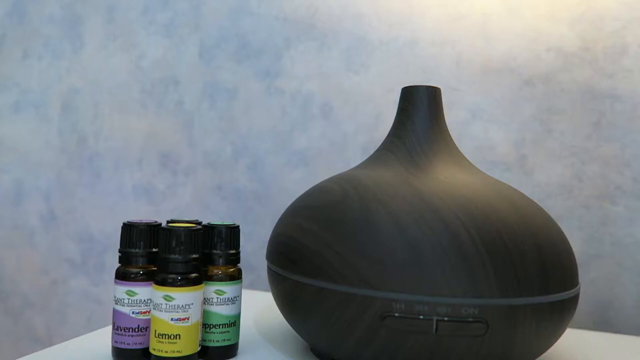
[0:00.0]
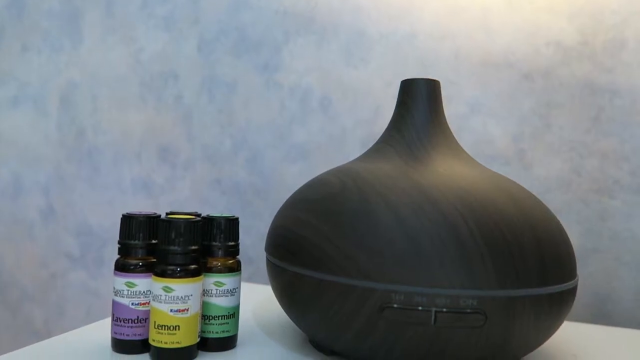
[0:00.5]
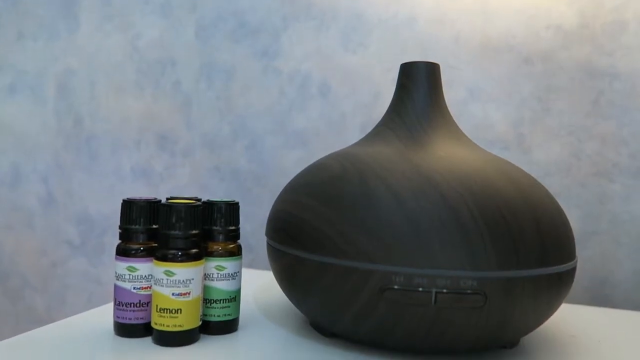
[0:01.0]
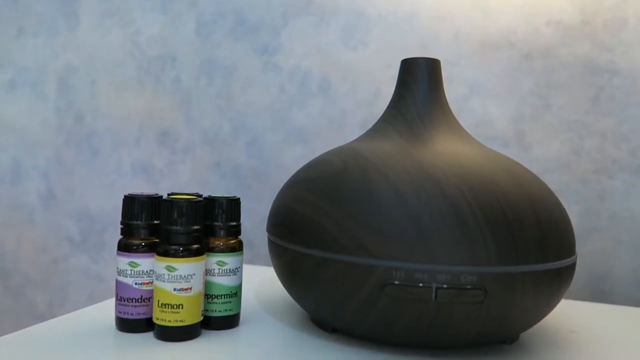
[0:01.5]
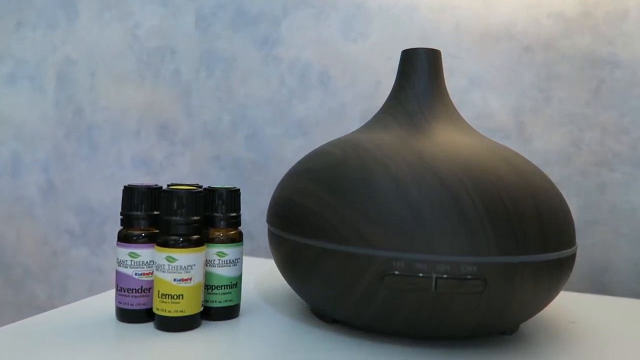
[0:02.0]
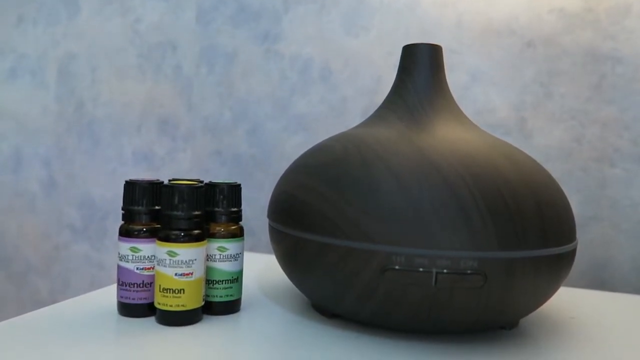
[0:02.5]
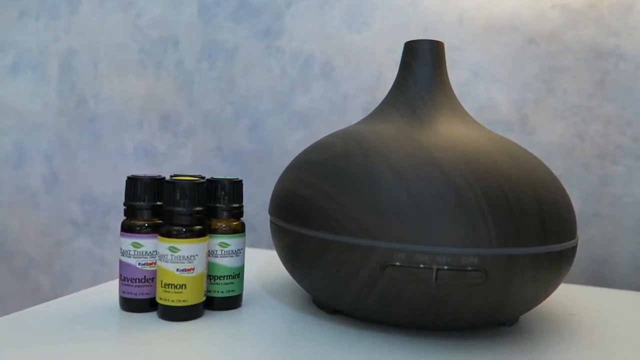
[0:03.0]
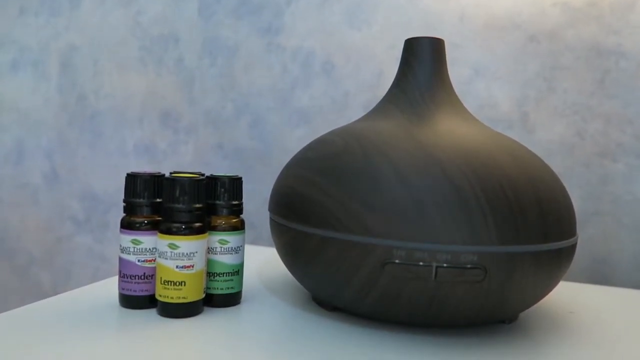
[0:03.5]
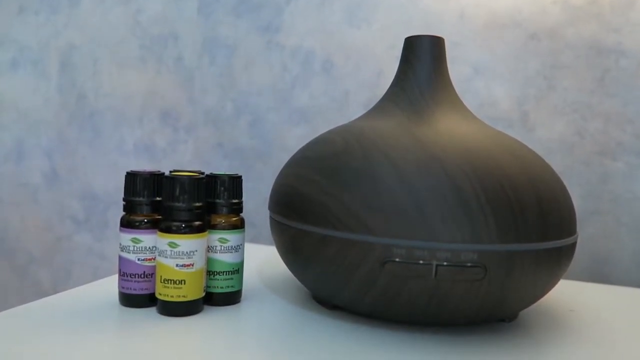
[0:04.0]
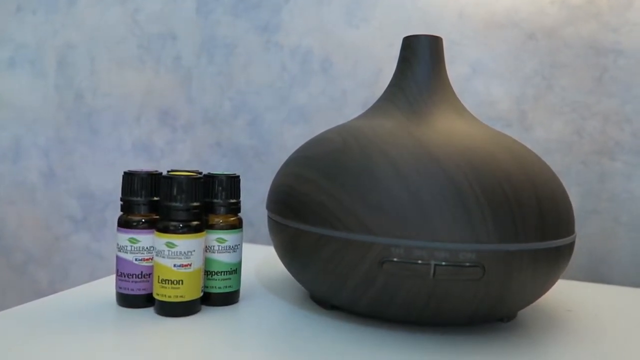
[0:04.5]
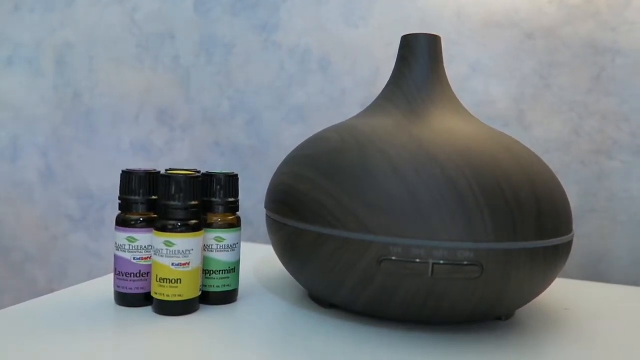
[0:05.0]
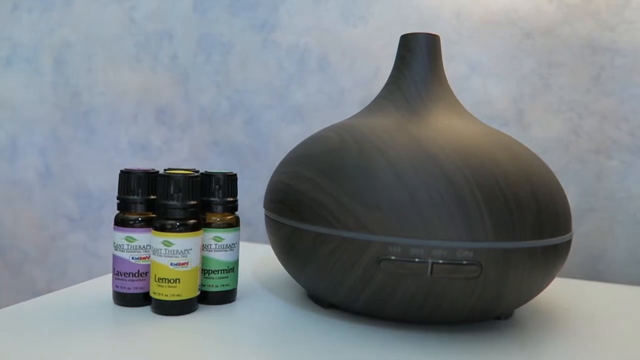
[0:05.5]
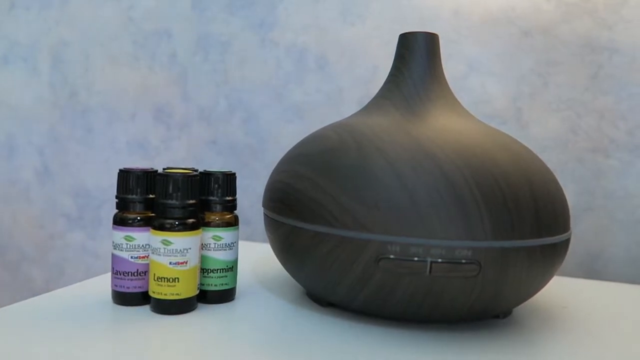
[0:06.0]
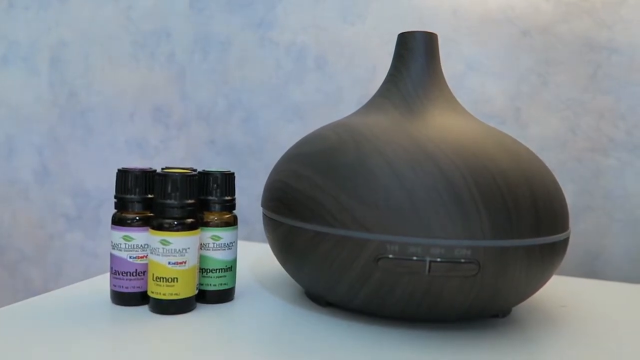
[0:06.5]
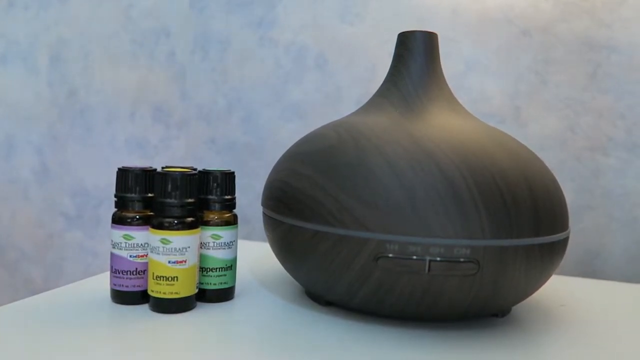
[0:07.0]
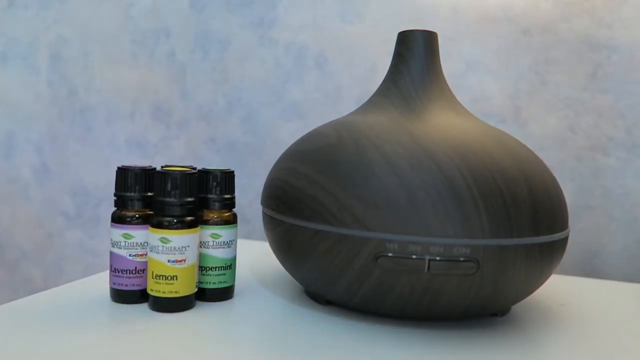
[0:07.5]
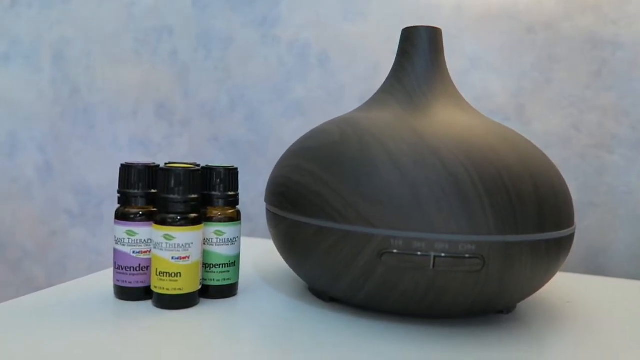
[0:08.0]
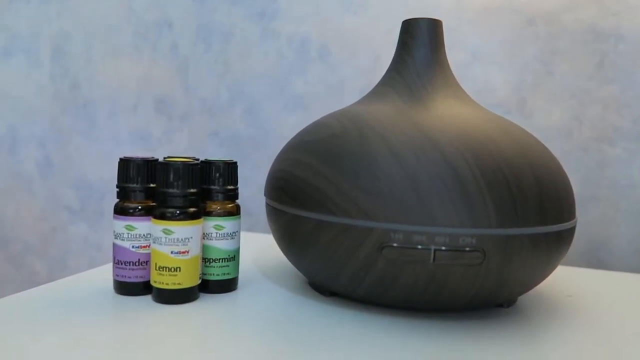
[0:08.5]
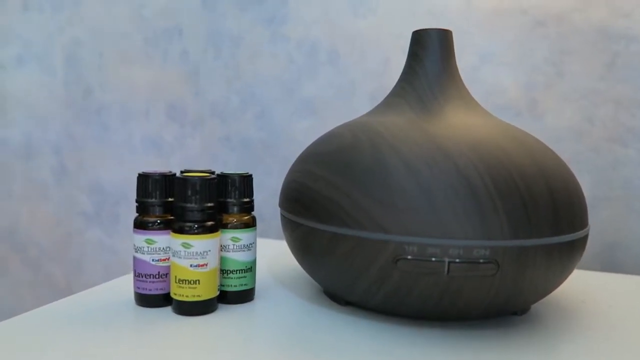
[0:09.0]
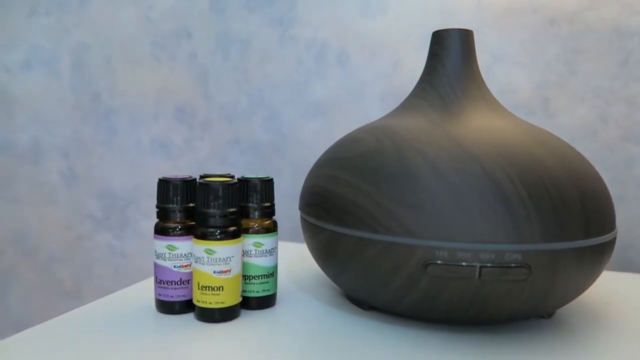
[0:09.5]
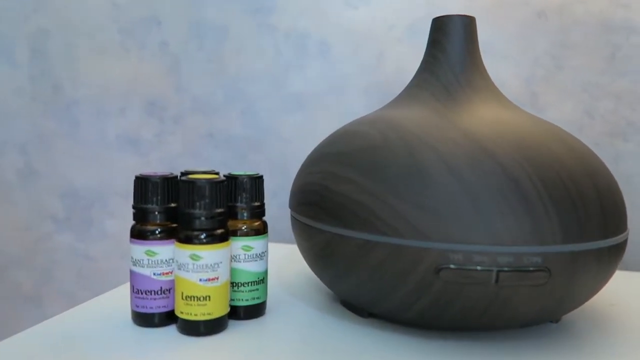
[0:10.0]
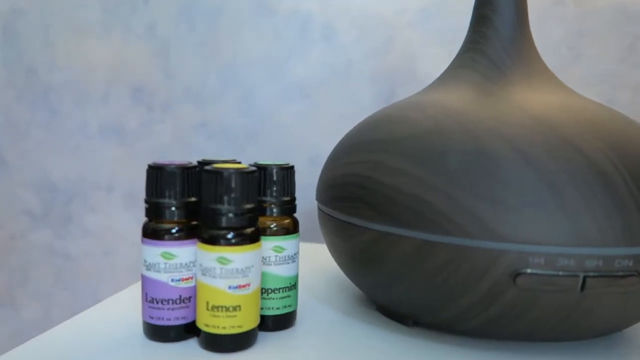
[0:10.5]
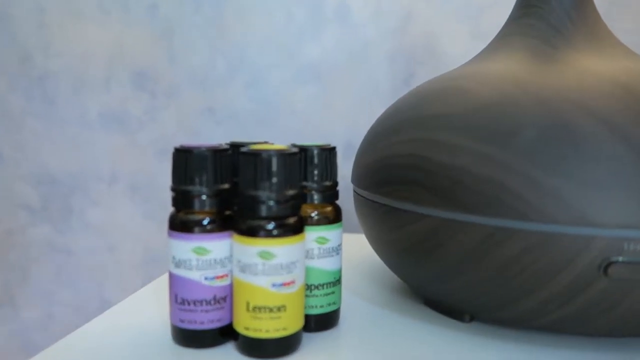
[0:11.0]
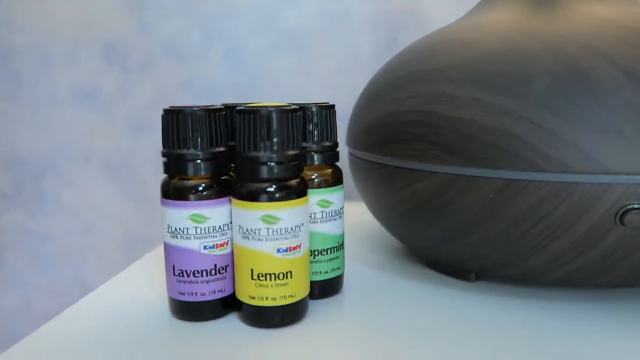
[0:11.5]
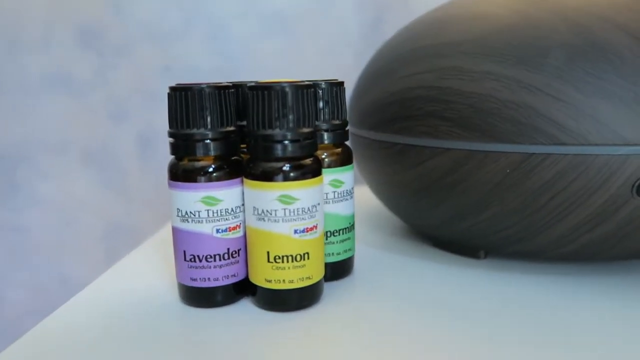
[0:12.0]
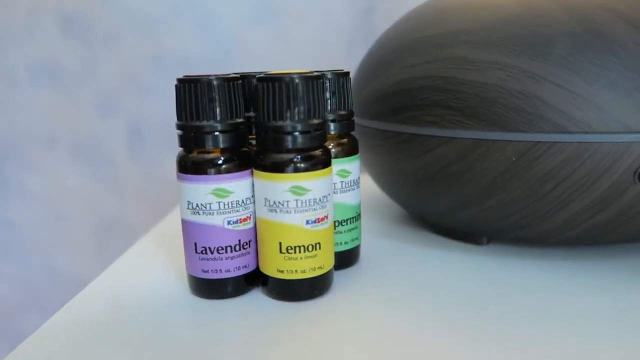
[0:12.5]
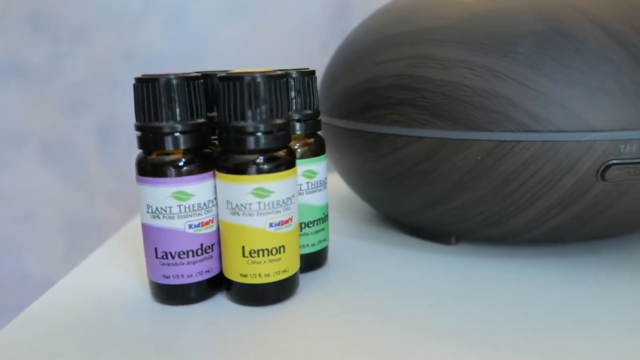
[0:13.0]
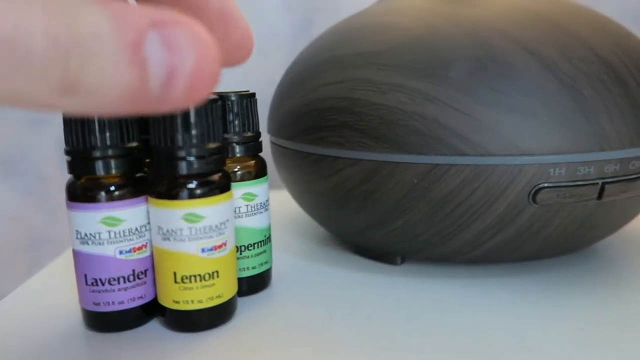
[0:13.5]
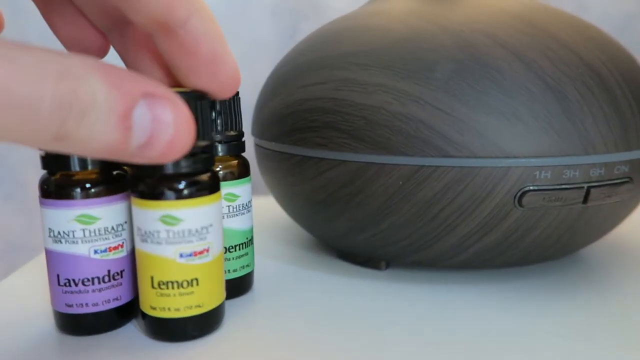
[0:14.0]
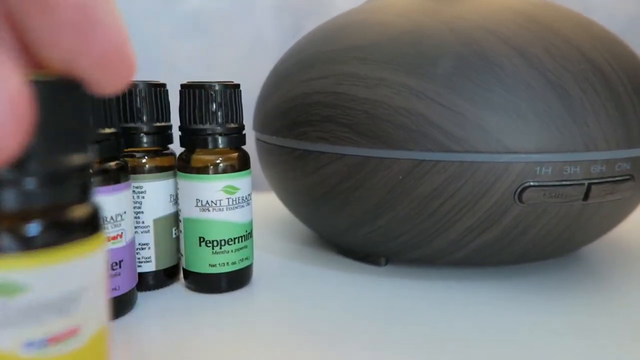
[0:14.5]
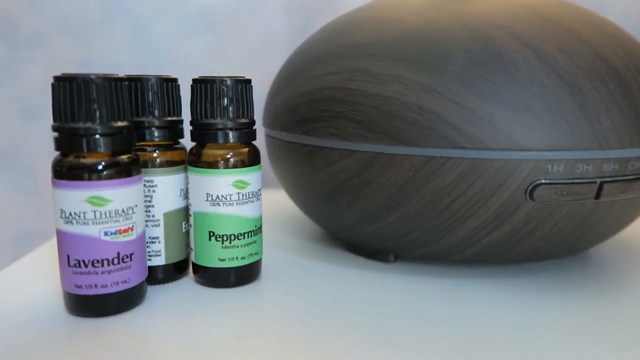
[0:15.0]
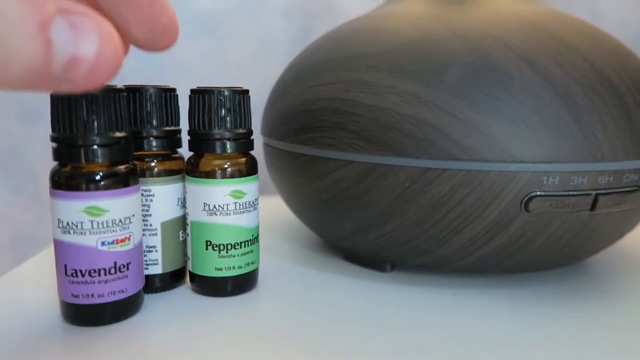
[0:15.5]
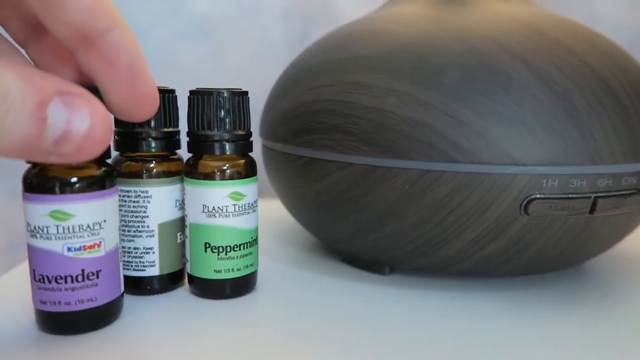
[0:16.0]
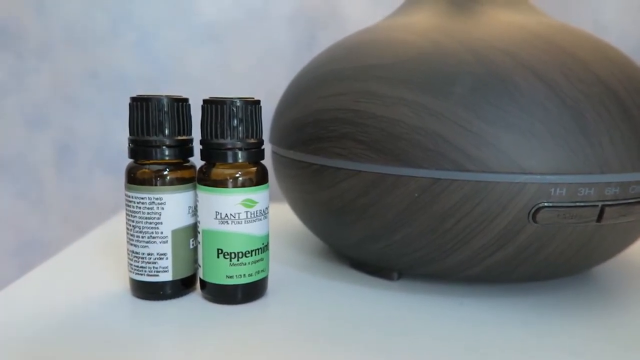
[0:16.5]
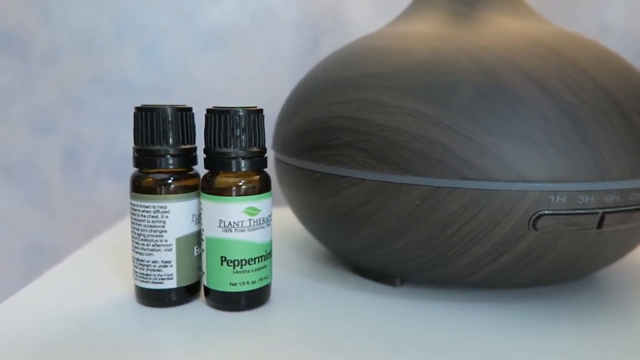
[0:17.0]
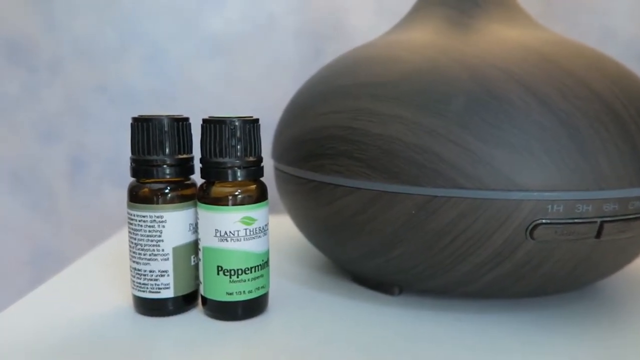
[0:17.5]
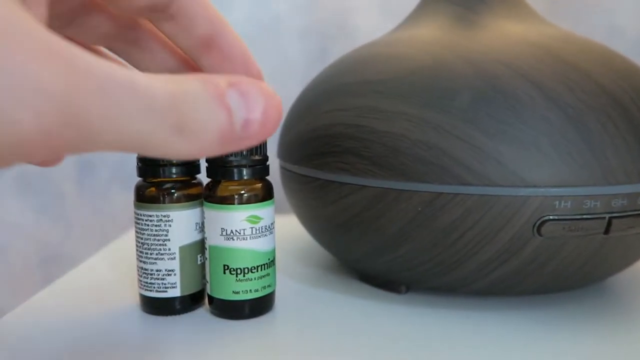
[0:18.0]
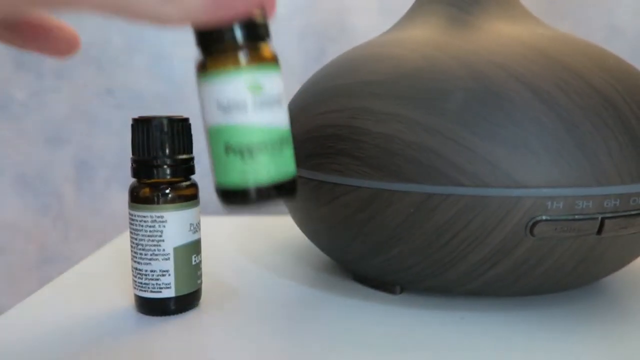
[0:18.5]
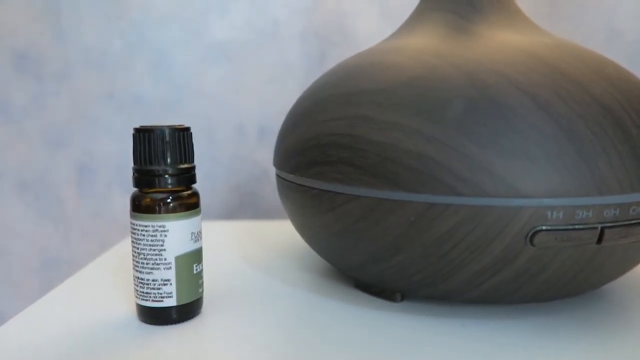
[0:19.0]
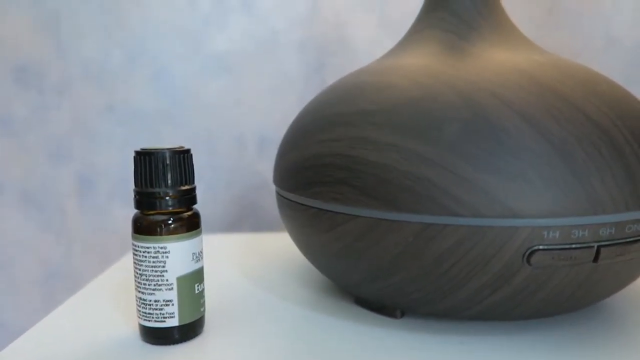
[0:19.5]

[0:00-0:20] A black beauty product appears, apparently a kind of air purifier that takes essential oils. On the left are three small jars of the same design, each a different colour: purple, then yellow, then green on the right. They are on a table with a blue and white wall behind them that looks like a sky with a cloud. The footage is a bit shaky, almost as if filmed on a phone. The camera zooms in on the bottles: the one on the left says "lavender", the one in the middle says "lemon", and the green one on the right says "peppermint". As the camera keeps shaking, someone picks up the lemon jar and takes it off screen, revealing another jar behind it with a label of a sort of grey or dark green colour. The lavender jar and then the peppermint jar are also picked up and removed from the screen, leaving only the one jar with the sort of grey or dark green label.